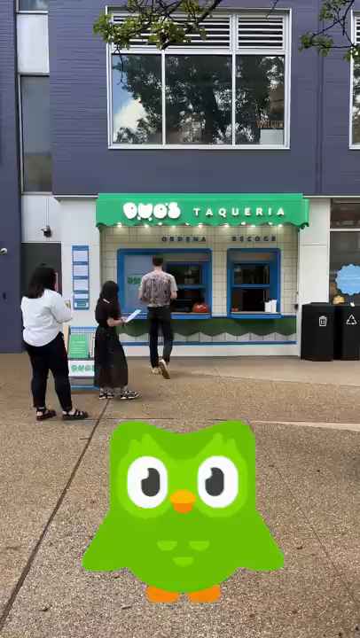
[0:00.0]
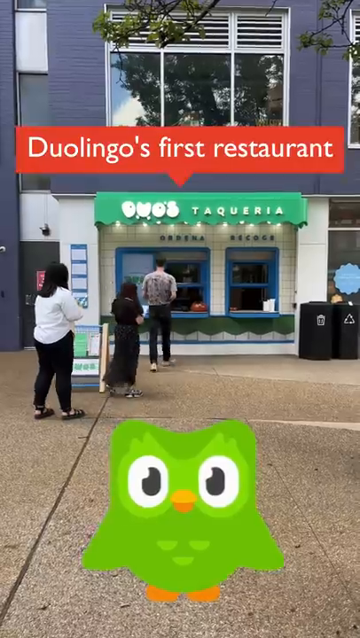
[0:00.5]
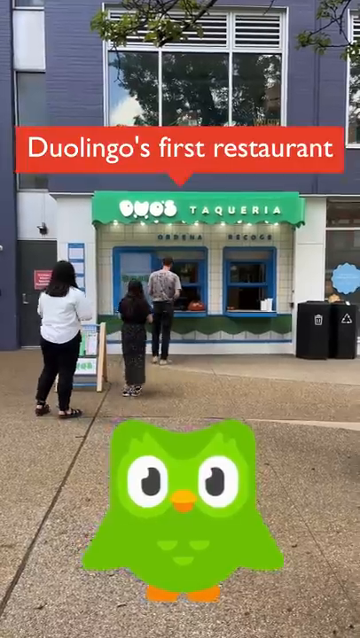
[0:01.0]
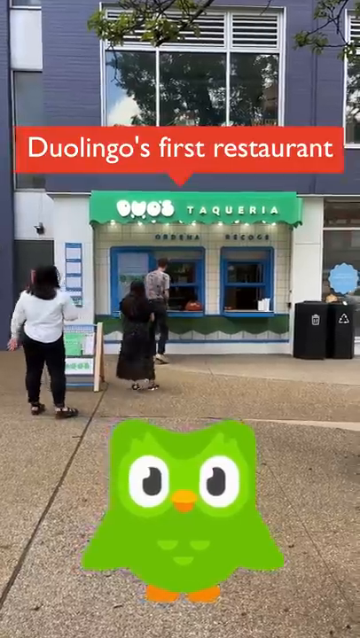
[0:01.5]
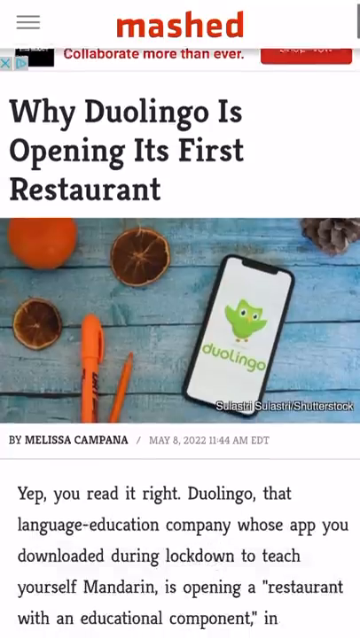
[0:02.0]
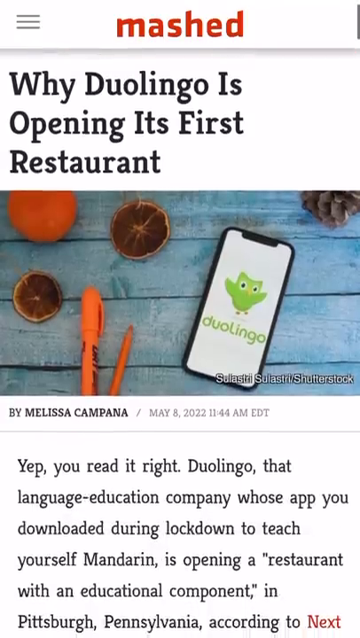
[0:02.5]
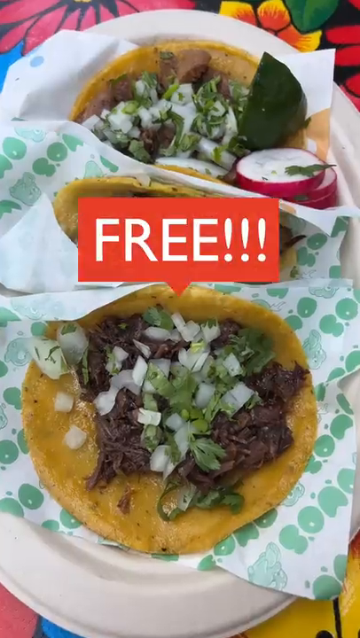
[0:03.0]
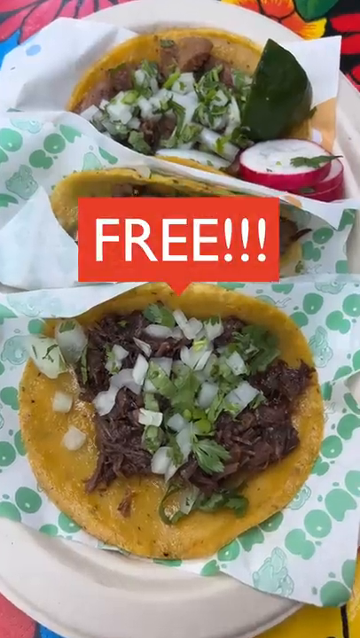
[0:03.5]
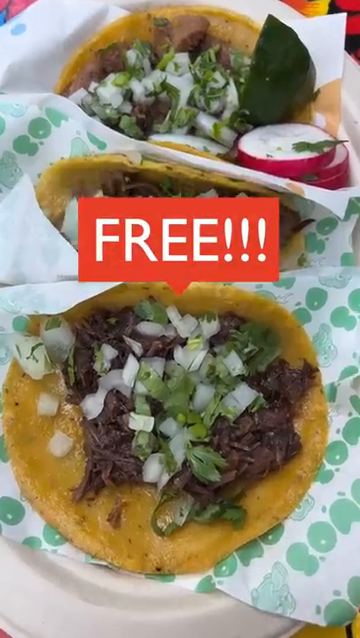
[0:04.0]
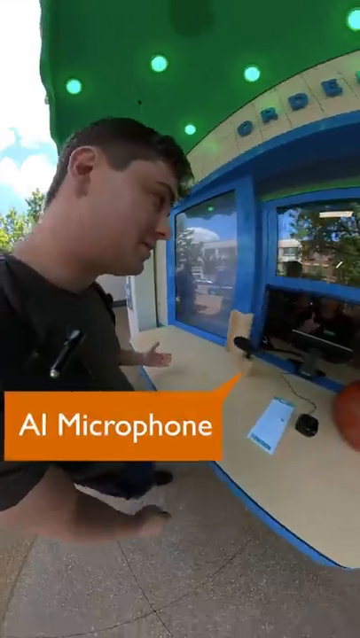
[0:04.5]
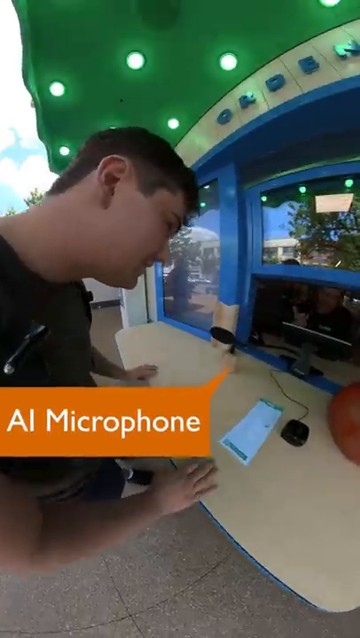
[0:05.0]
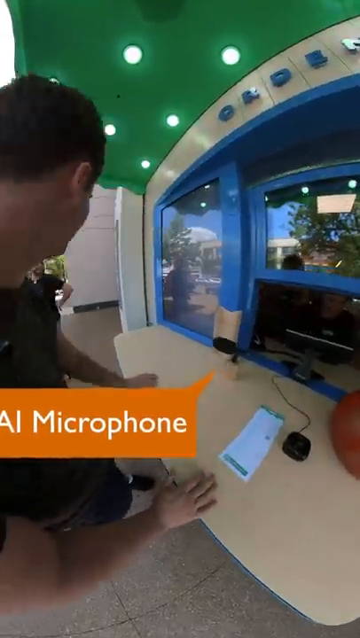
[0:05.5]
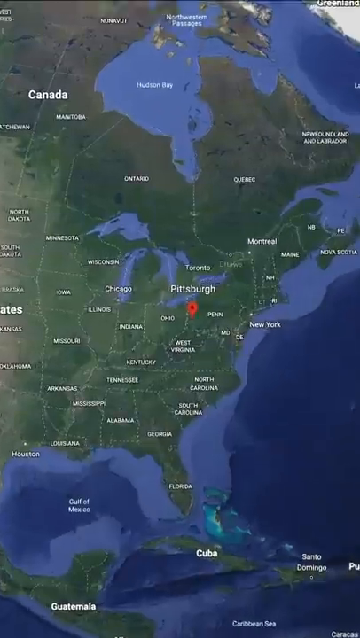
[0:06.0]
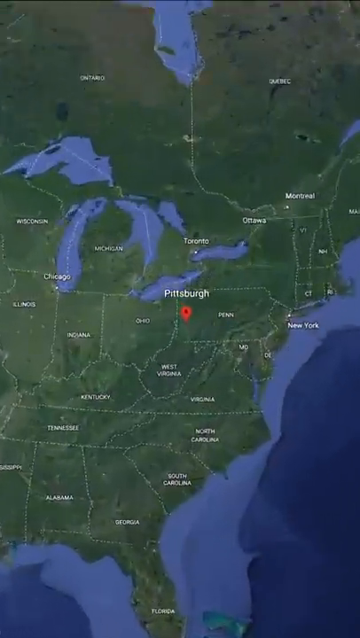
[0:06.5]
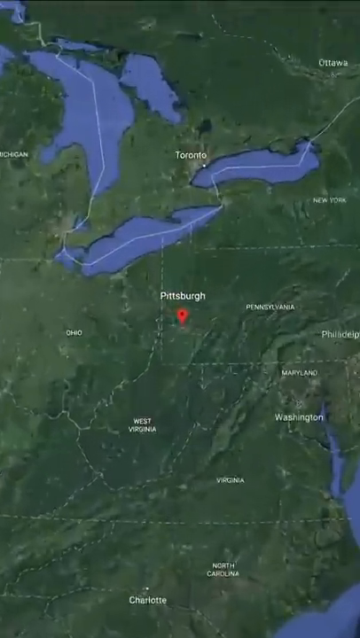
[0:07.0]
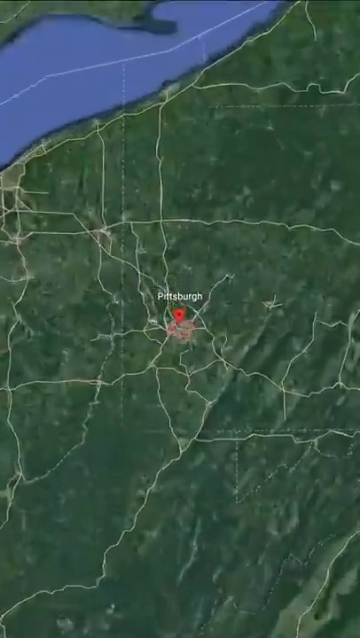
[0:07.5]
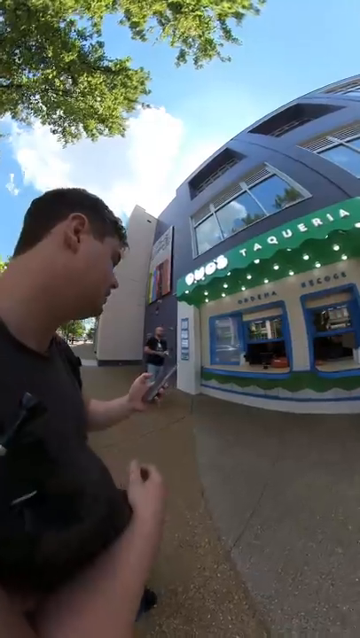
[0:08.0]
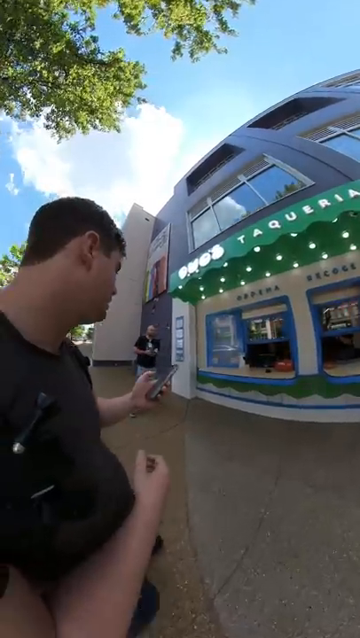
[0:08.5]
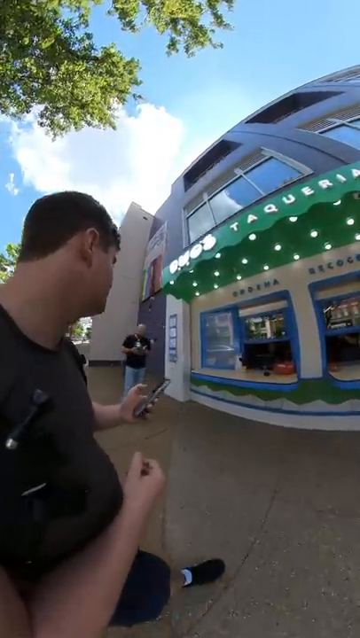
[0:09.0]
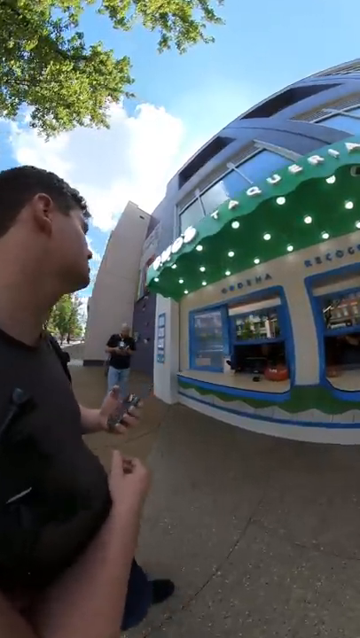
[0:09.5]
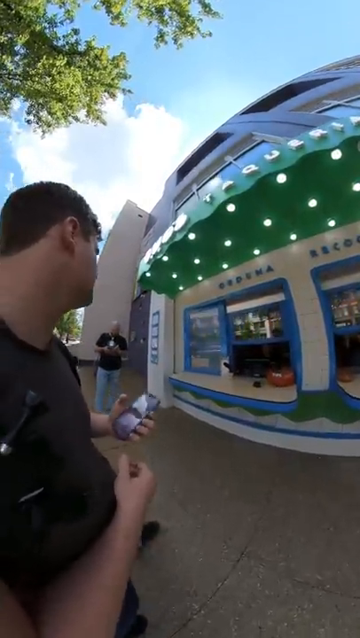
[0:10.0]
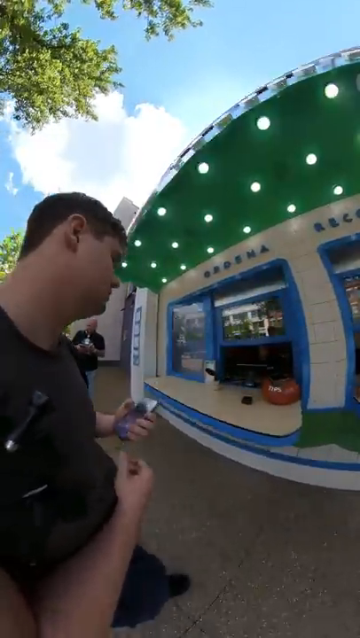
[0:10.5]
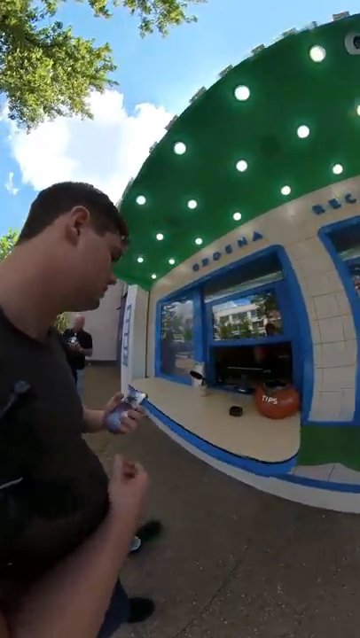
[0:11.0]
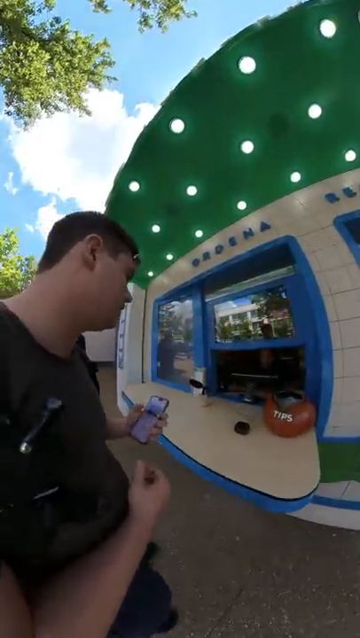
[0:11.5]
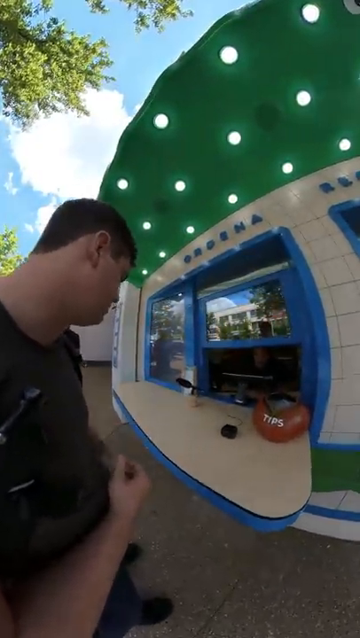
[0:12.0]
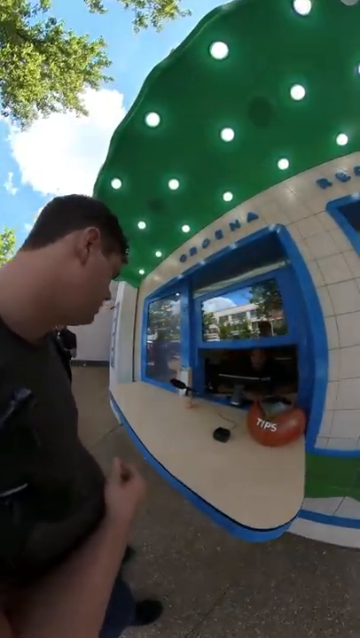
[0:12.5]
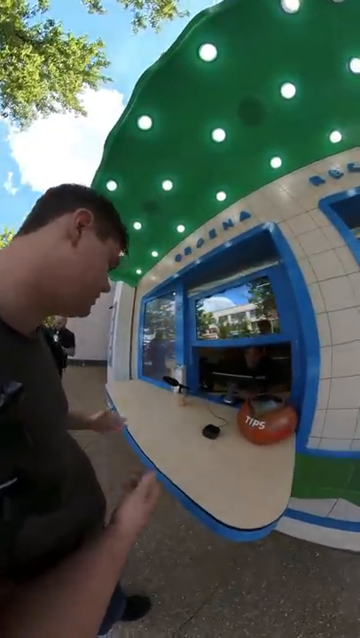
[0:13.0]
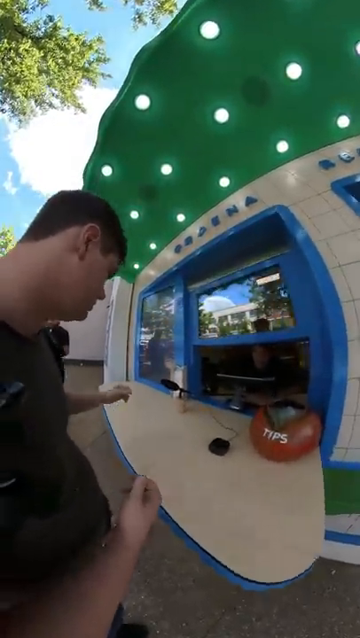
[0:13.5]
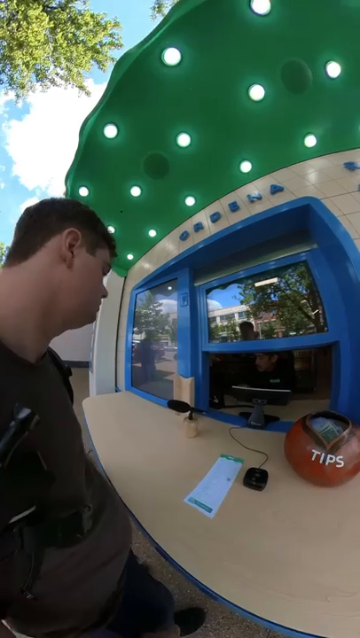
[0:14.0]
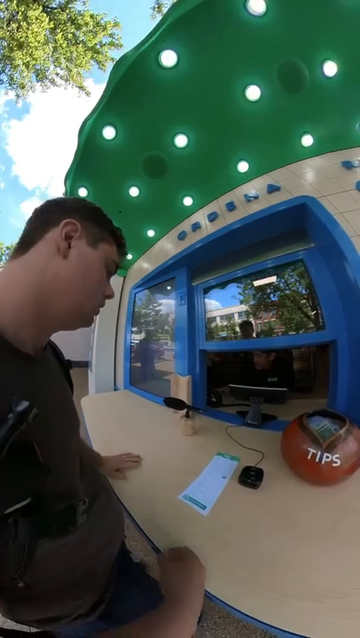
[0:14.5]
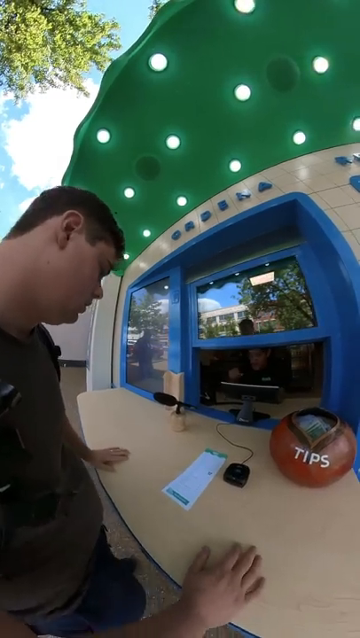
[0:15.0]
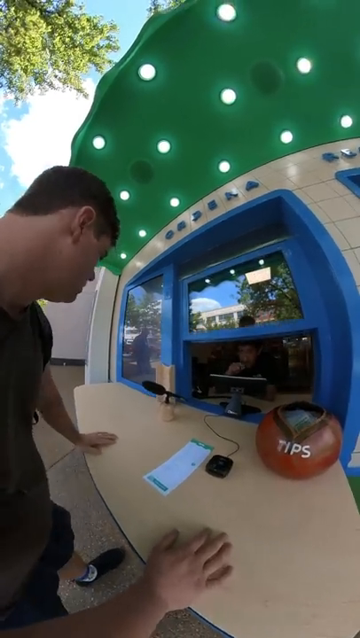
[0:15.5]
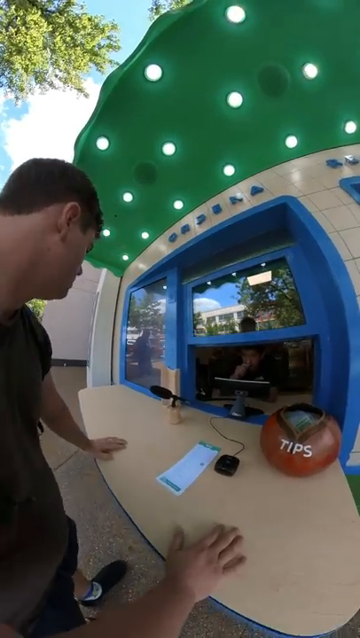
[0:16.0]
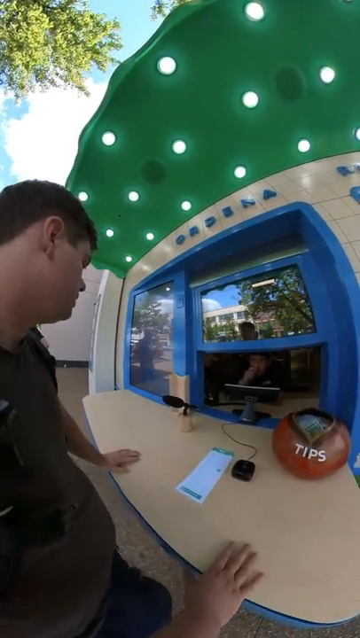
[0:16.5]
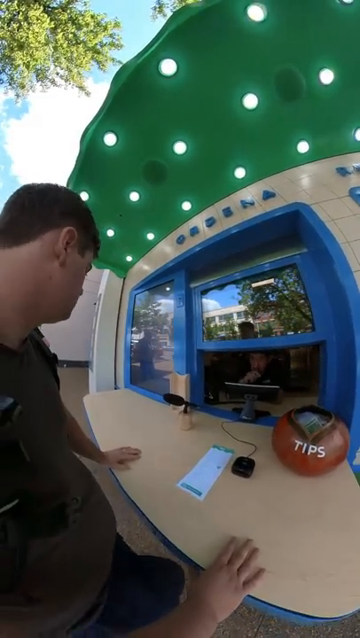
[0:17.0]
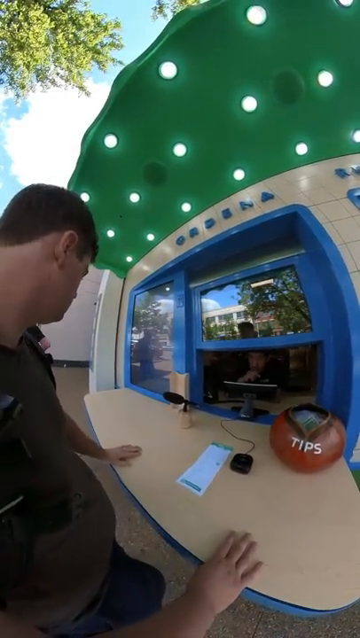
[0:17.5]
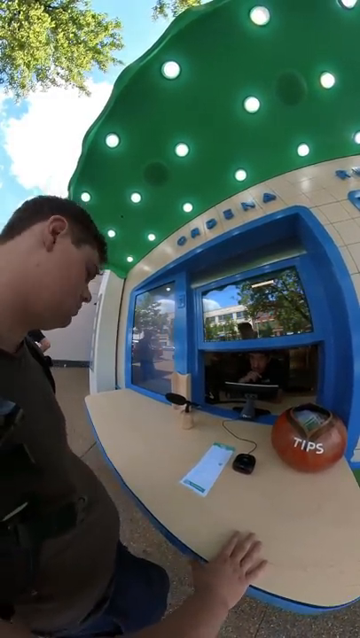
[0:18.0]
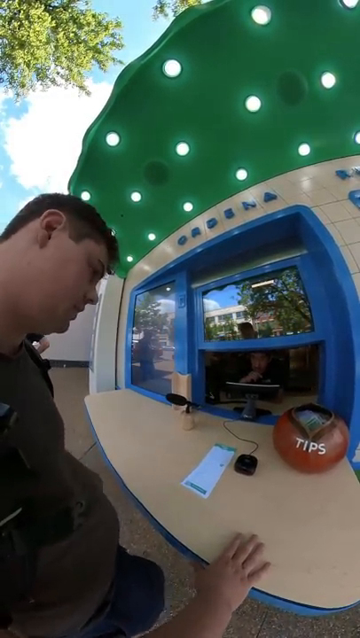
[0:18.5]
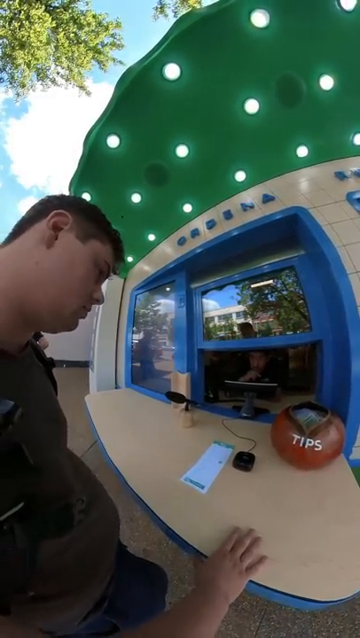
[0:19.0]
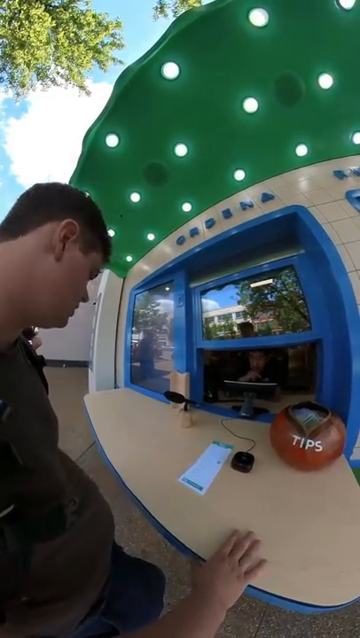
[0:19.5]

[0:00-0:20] A man appears to be approaching an outdoor restaurant in a city, the kind where you order at a window on the street. A map, apparently of the United States, is shown, presumably with a dot marking where the man is; the restaurant seems to be located somewhere around Missouri, maybe Kentucky or Illinois. A tip jar is on the counter at the window where the man appears to be placing an order. The window has a blue frame, and the name Guadaluango is associated with the place, probably a Mexican restaurant, possibly serving tacos. The building is colorful, with a green front near the roof and blue window frames. The scene keeps switching back and forth between what looks like a newspaper clipping about the restaurant, a picture of tacos, and the man at the window ordering. He might be holding something, apparently a phone. There are references to Guadaluango's first restaurant and an AI microphone. Something is free, seemingly a free introductory offer the man is taking advantage of.